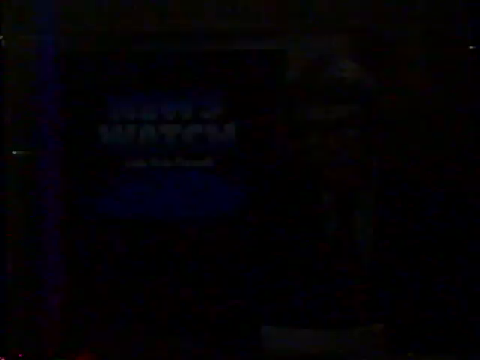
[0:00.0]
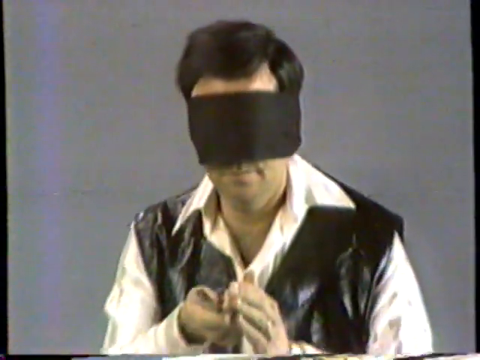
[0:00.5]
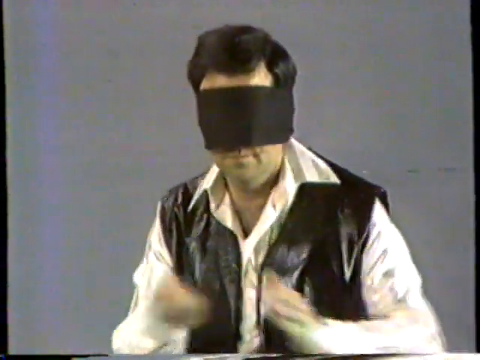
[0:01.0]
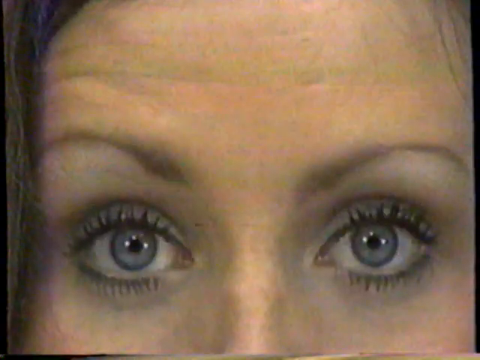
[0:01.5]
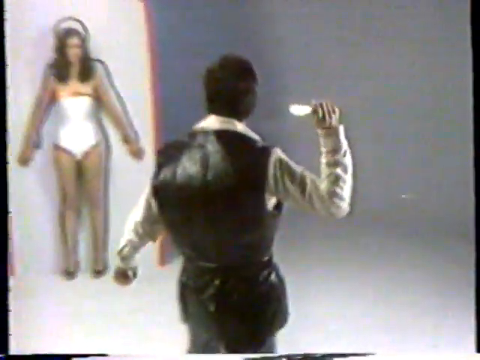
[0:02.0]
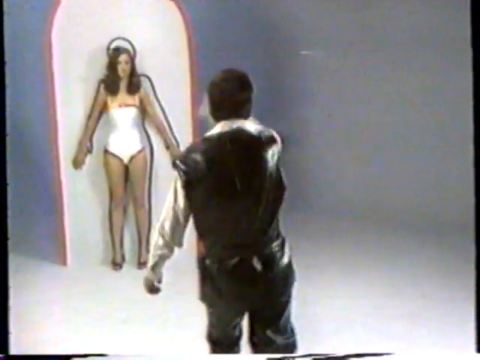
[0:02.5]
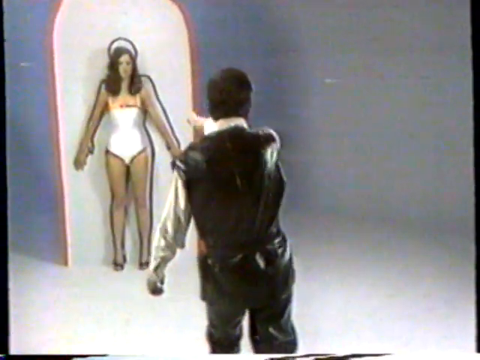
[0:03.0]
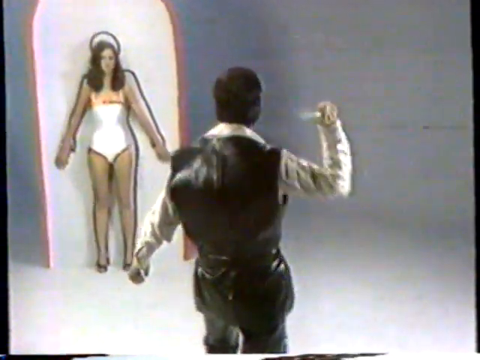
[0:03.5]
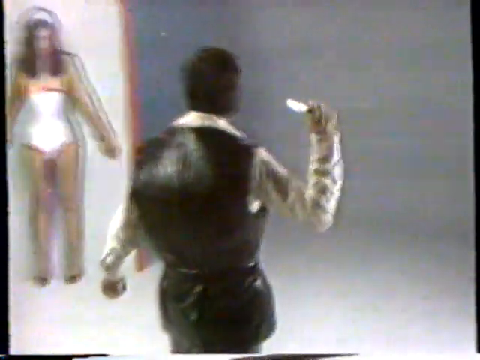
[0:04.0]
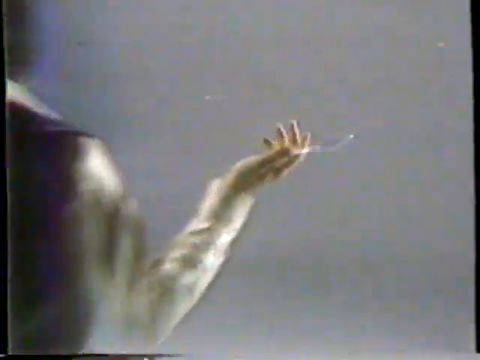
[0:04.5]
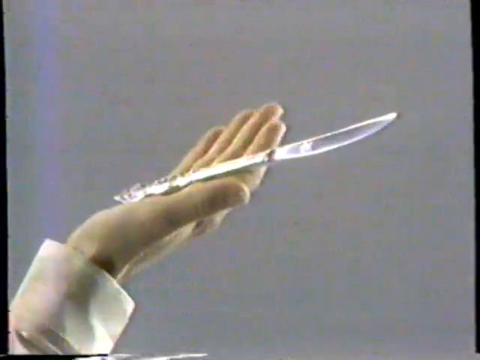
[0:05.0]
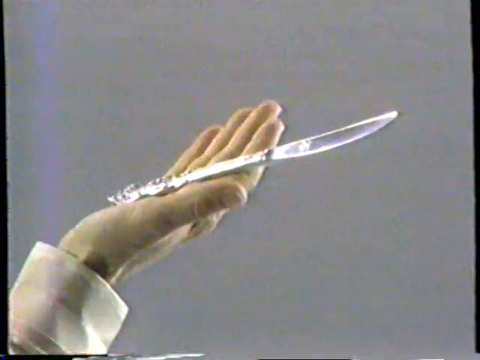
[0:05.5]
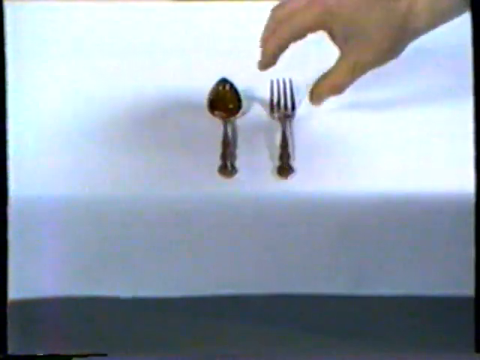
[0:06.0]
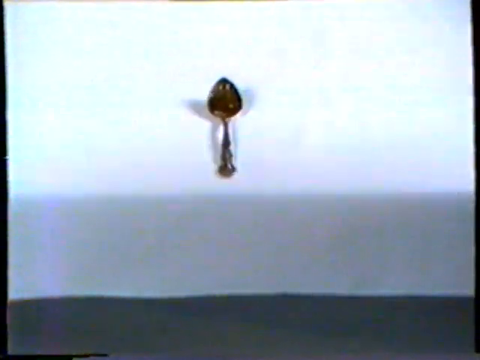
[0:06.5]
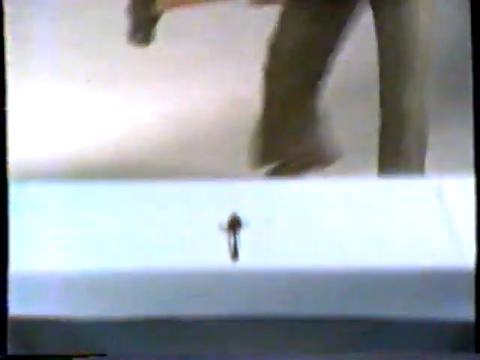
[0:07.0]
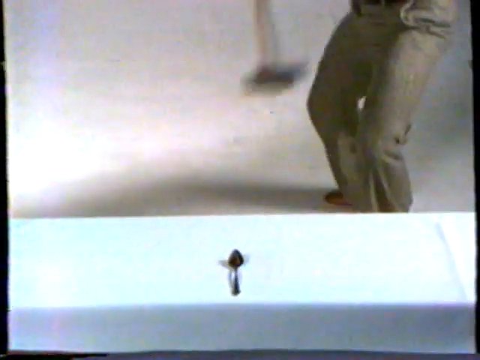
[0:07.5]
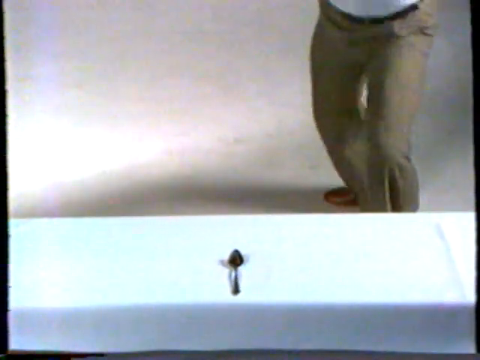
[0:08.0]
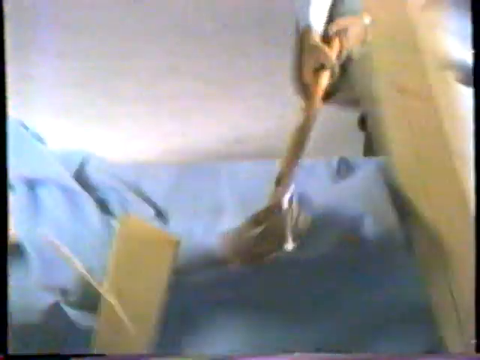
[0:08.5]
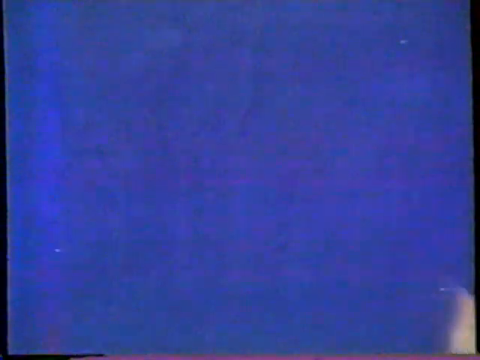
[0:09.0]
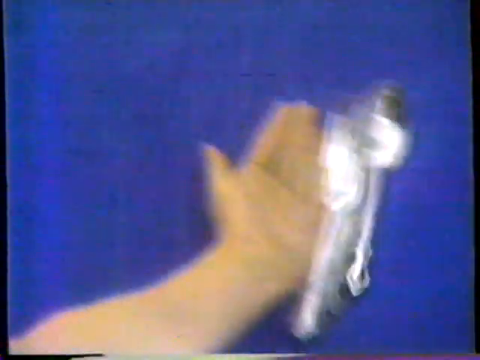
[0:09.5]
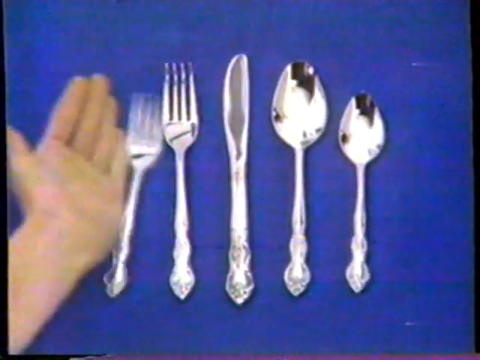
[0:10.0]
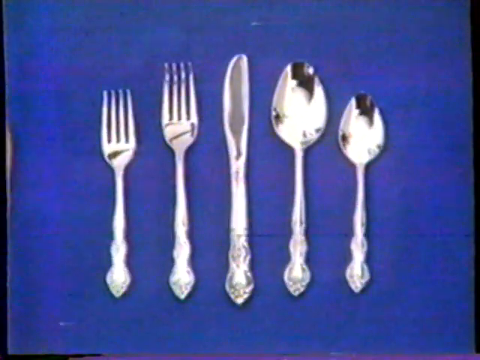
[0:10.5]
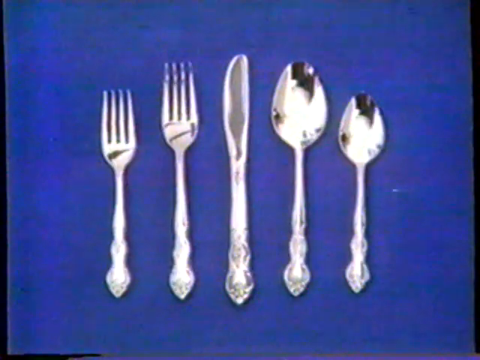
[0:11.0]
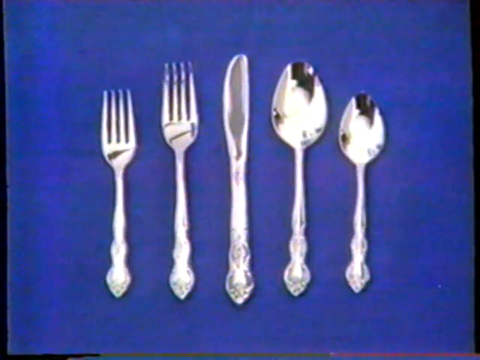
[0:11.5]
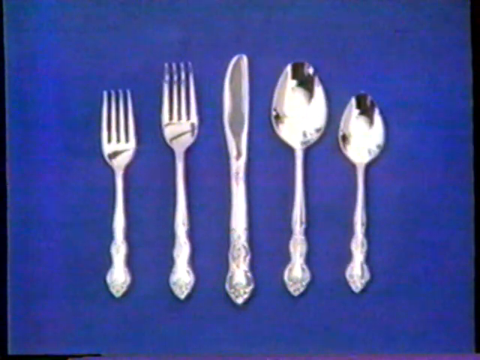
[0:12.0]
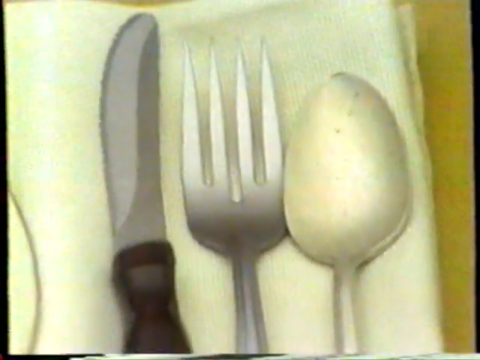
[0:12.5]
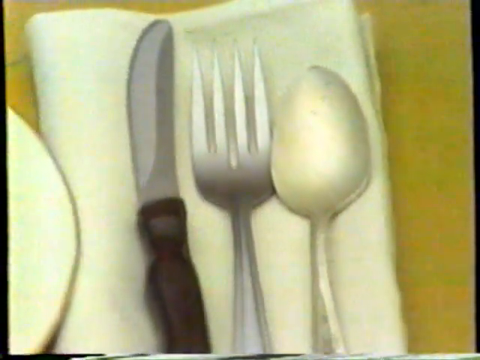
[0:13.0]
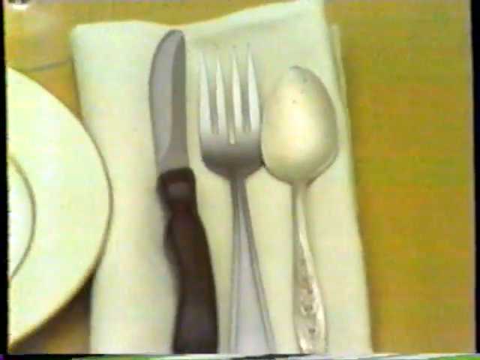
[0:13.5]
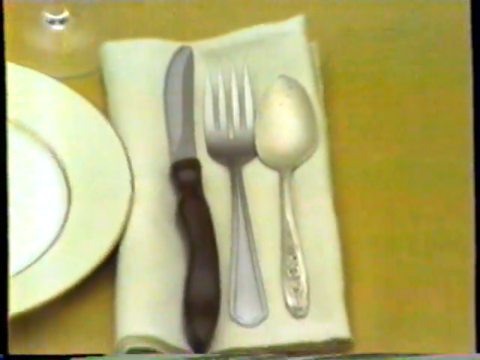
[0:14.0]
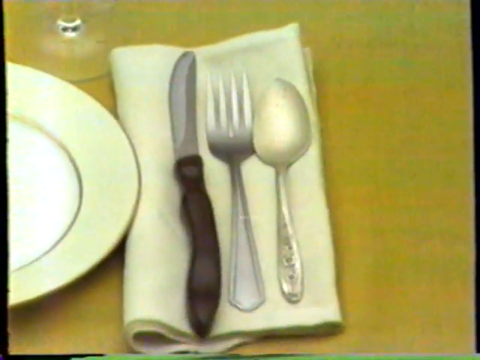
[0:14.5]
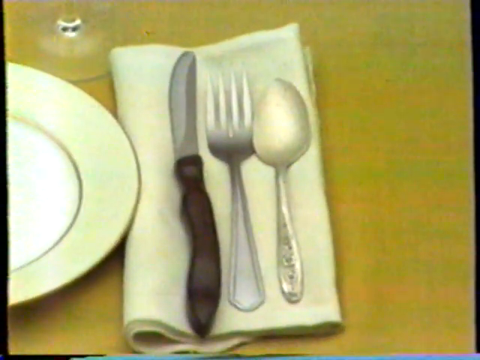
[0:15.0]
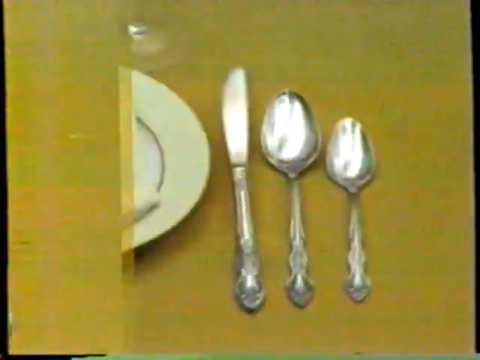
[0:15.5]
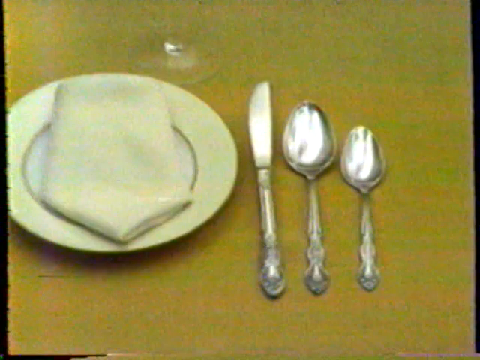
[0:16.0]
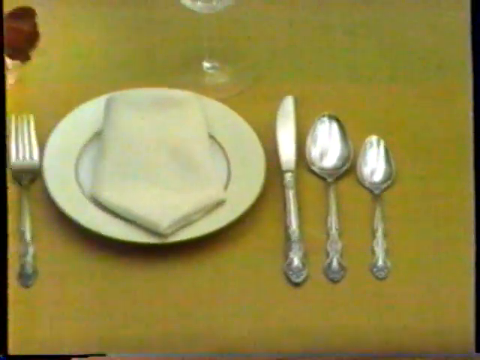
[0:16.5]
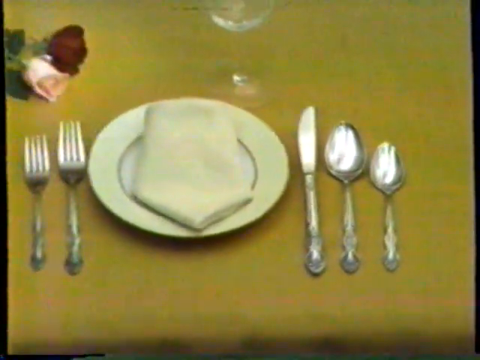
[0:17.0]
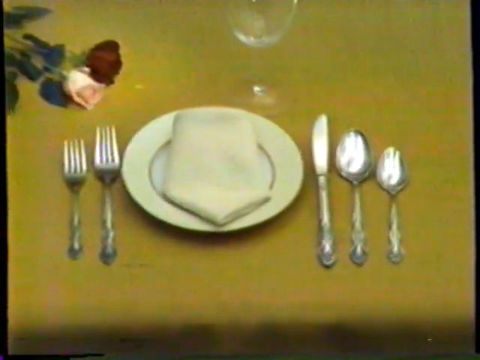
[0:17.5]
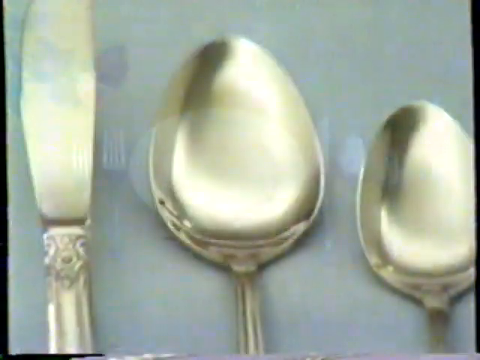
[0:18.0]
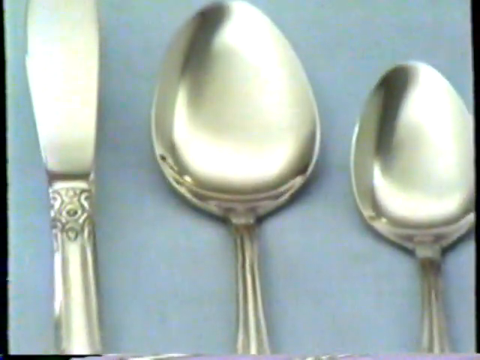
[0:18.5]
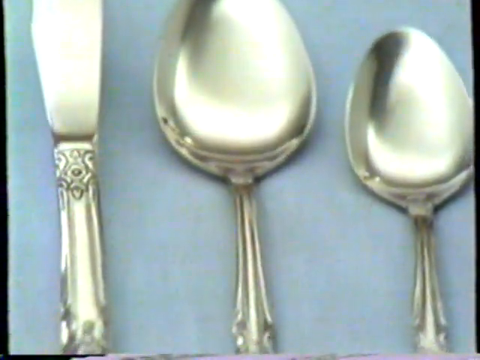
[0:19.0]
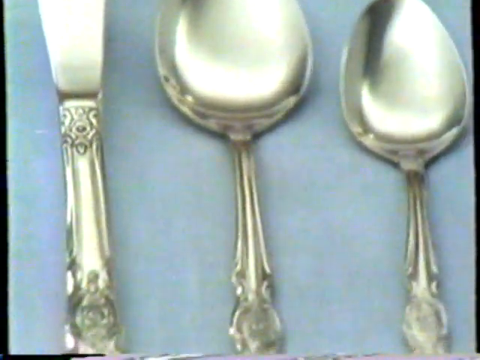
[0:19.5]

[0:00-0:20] The screen fades in from black on a man in a black leather vest over a white shirt, wearing a big black blindfold that covers most of his face. He jiggles something in his hand and throws it at a woman in a white one-piece body-shaping outfit who stands against the outline of a human on a white archway. The thrown object is a silver knife, which is then shown in the man's hand as he picks up a sledgehammer and hits the table, destroying it and revealing its blue tablecloth. He moves his hand from the right of the screen to the left, revealing a set of silverware instead: a small spoon, a big spoon, a silver knife, a big silver fork and a small silver fork, all with wavy embroidered handles. The scene lingers on the set for a moment. A different scene follows: a dirty spoon, a normal silver fork and a kind of blunt, stubby-looking knife with a black curvy handle on top of a napkin on a yellow tablecloth, next to a round plate. This transitions to a similar scene in which that cutlery has been replaced by the silver cutlery set on the same yellow tablecloth next to the same plate. Then, on a blue tablecloth, the camera pans over the pieces of cutlery from top to bottom.